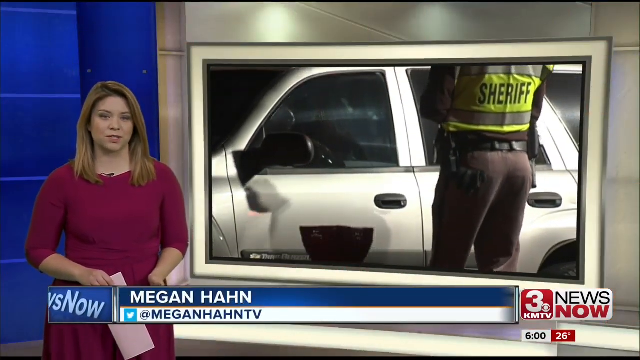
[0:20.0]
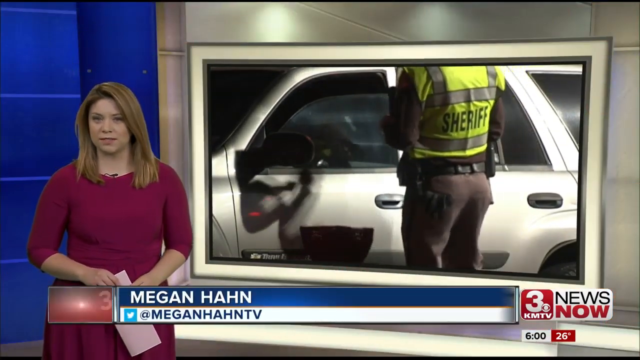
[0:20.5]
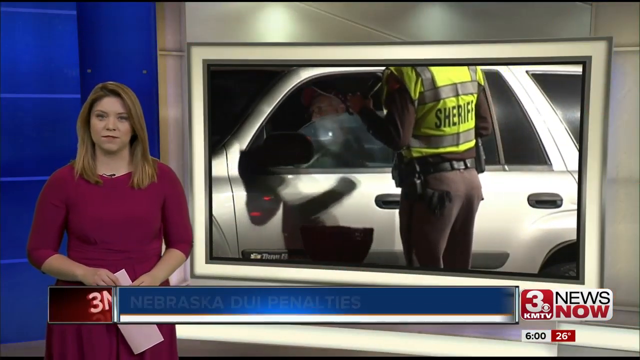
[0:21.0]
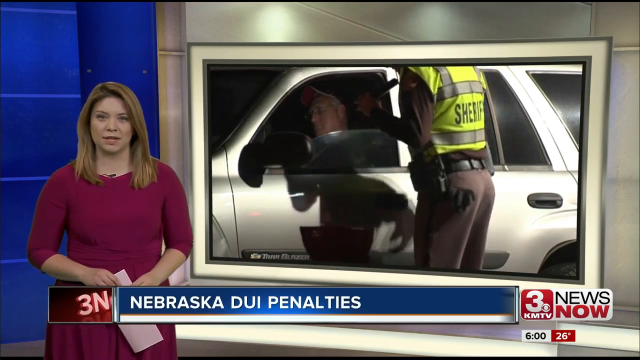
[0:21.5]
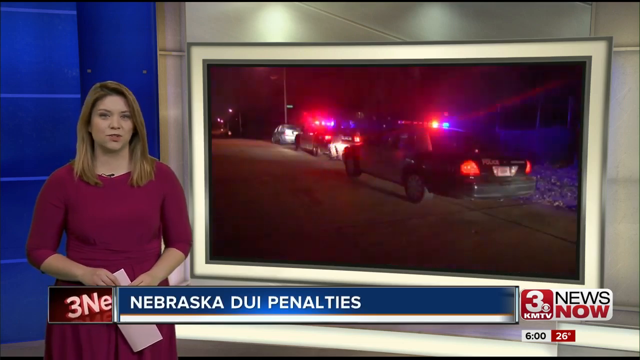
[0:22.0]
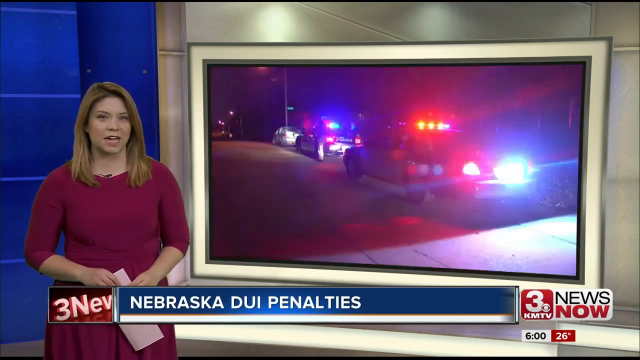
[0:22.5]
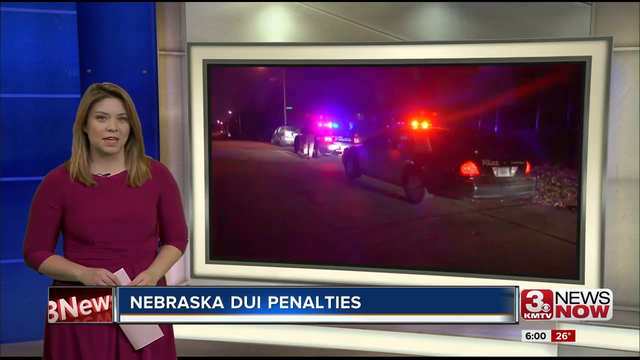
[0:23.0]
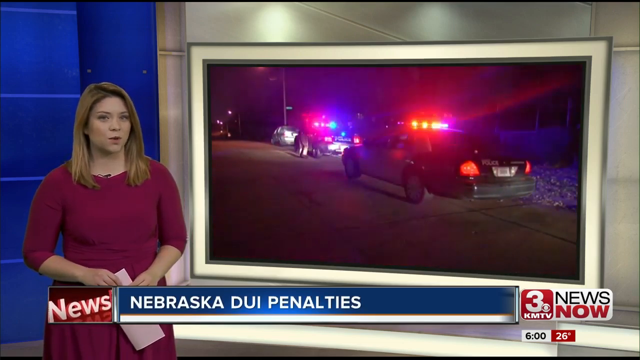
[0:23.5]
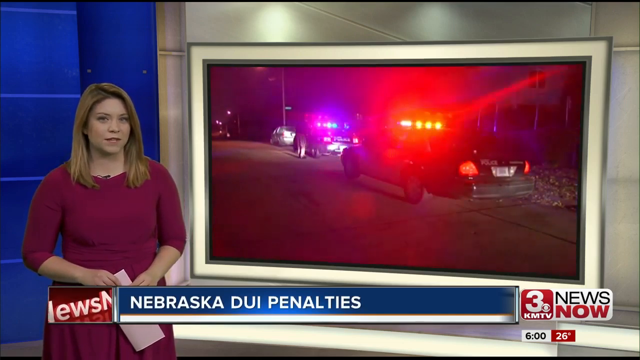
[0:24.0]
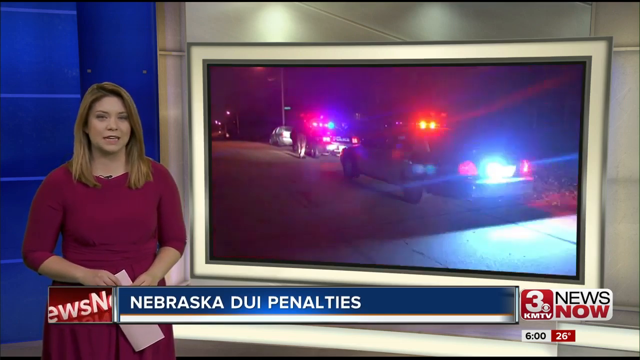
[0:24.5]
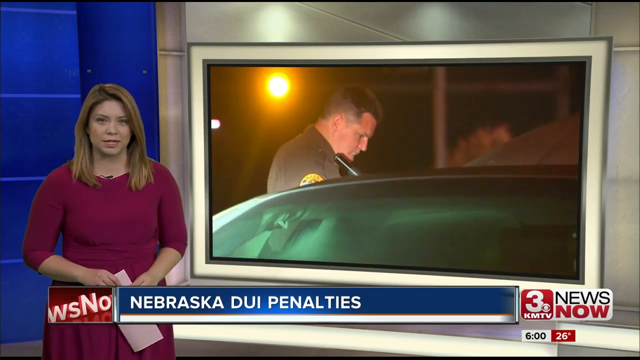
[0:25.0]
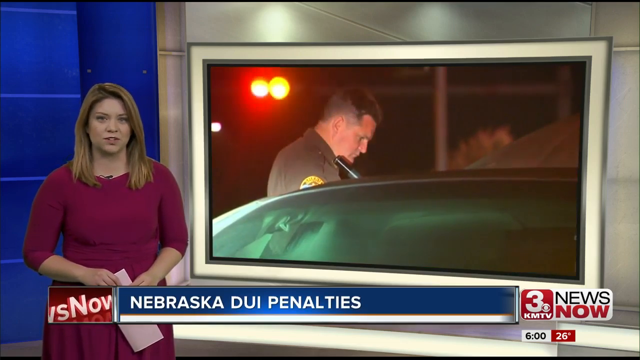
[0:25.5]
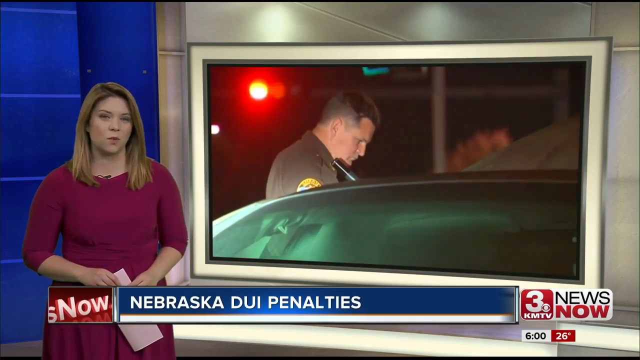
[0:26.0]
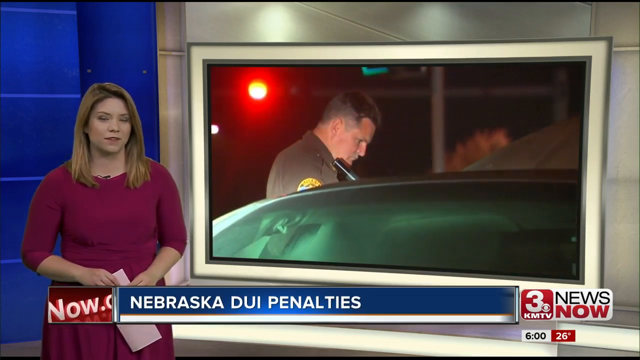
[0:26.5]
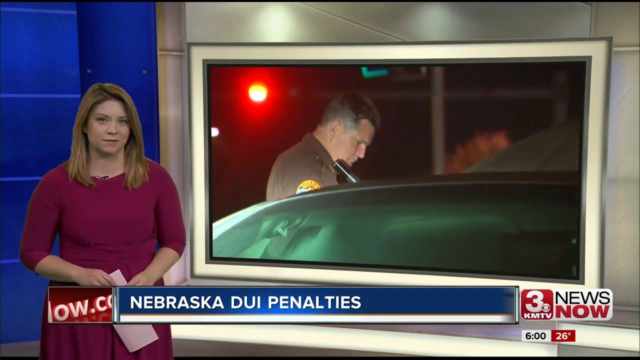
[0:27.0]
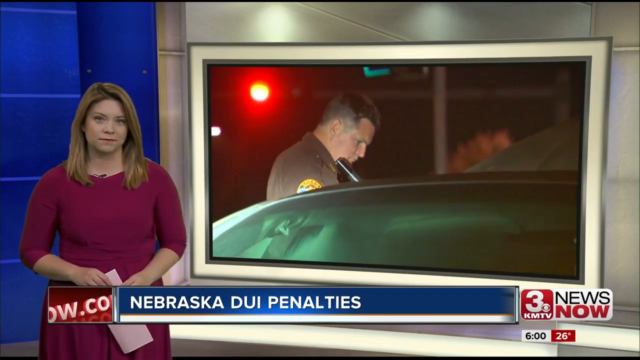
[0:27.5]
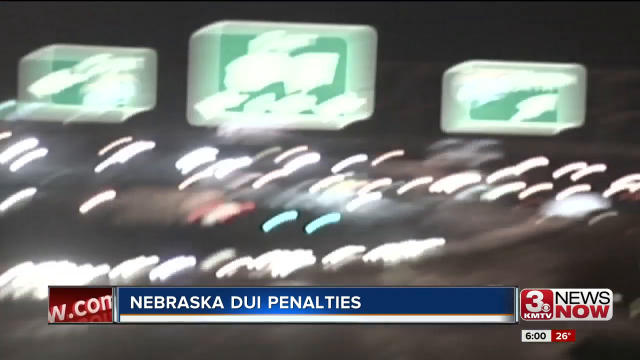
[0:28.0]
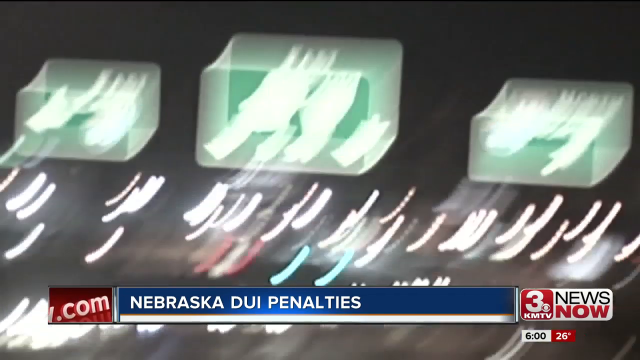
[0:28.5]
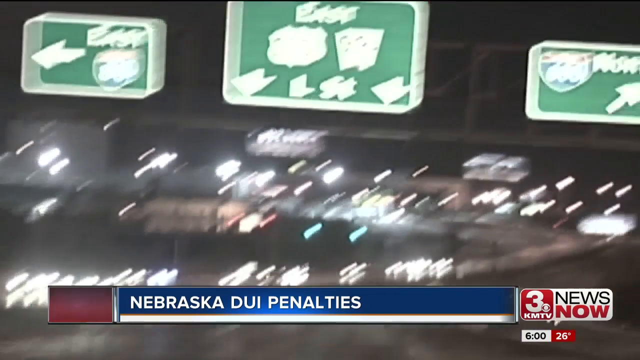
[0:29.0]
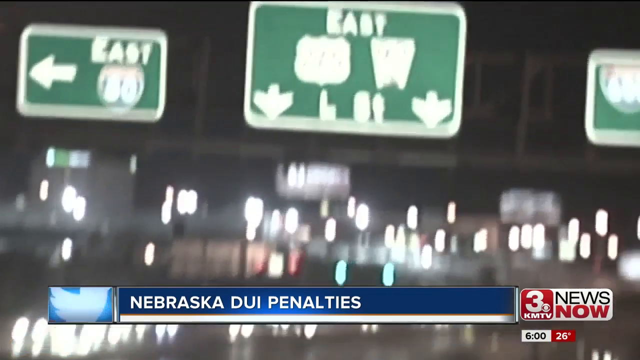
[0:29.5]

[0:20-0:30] Megan Hahn continues her report on driving under the influence. On a large monitor over her left shoulder, two police cars with flashing lights are at the side of the road with a car they have pulled over. A uniformed police officer has his torch out as he checks a motorist he is talking to. Then a very hazy image of a road appears, with signs pointing in an easterly direction that can just about be read.